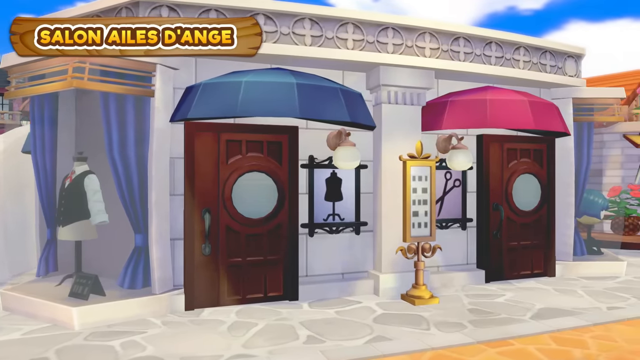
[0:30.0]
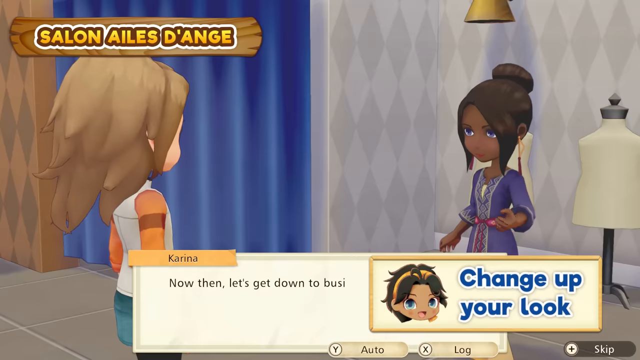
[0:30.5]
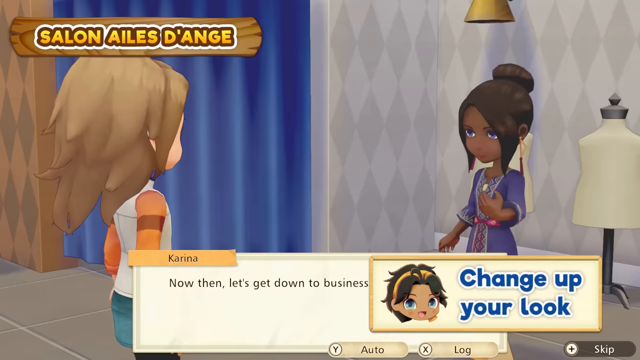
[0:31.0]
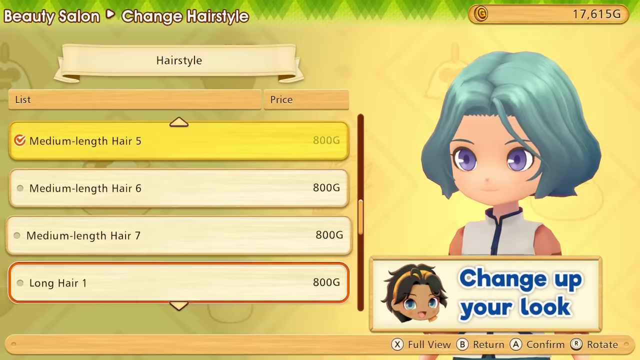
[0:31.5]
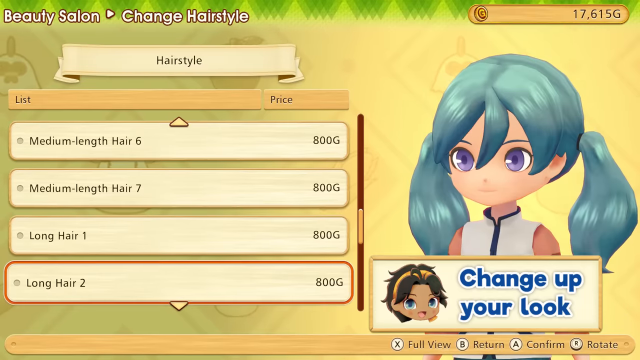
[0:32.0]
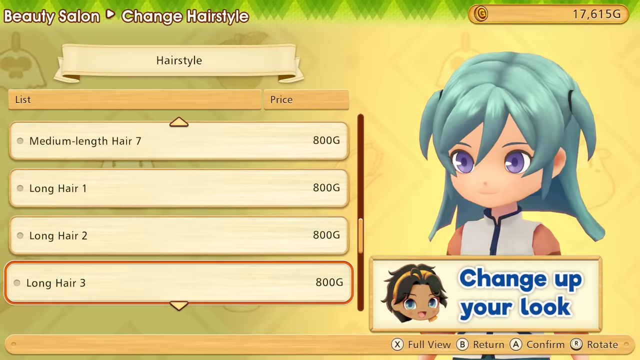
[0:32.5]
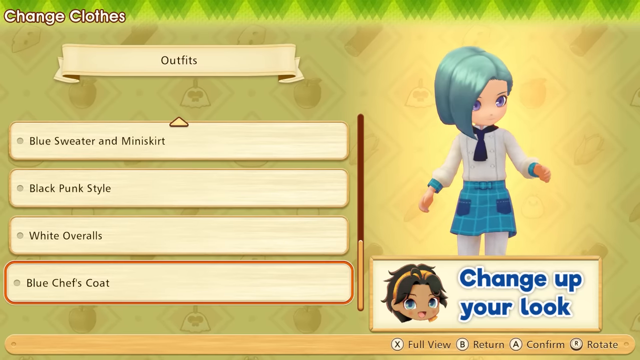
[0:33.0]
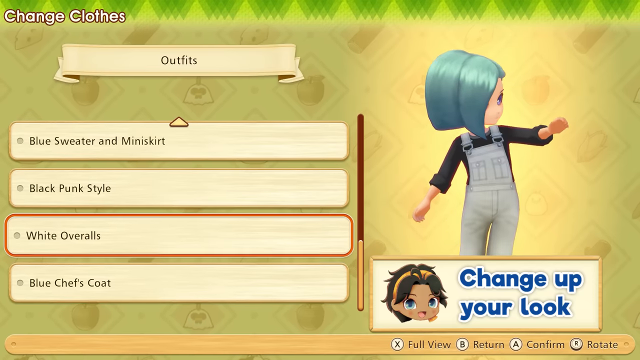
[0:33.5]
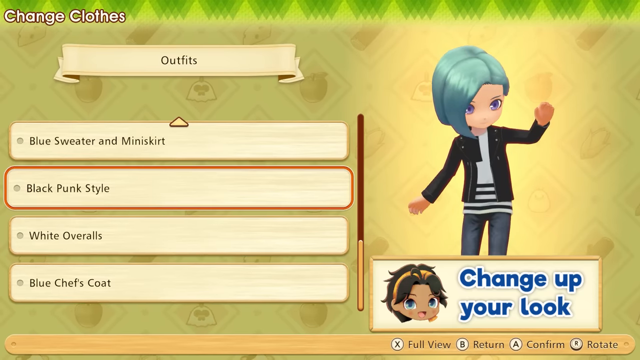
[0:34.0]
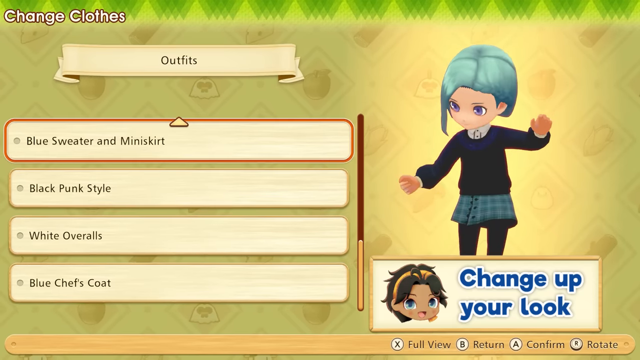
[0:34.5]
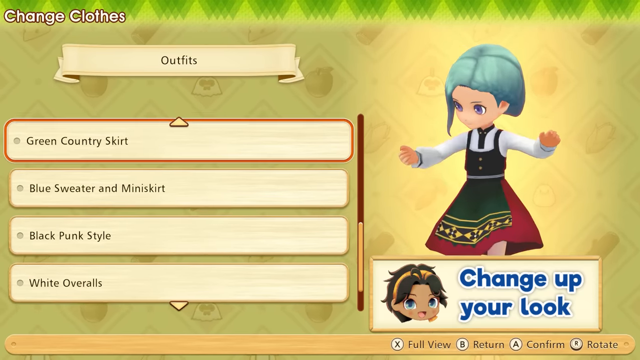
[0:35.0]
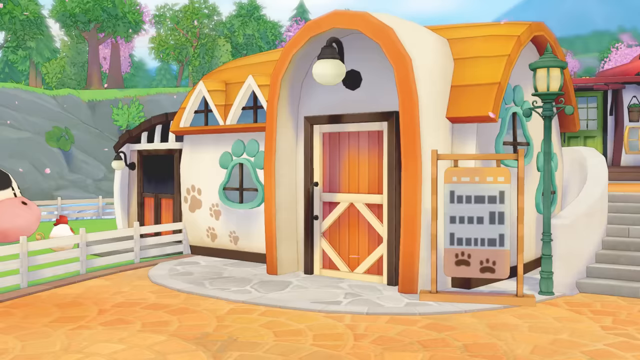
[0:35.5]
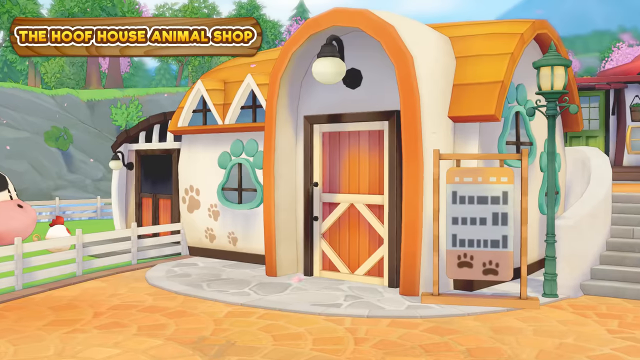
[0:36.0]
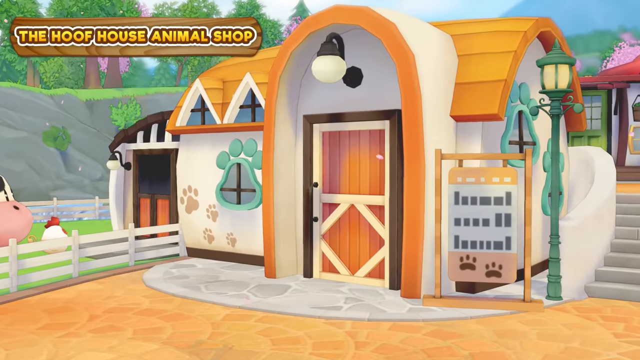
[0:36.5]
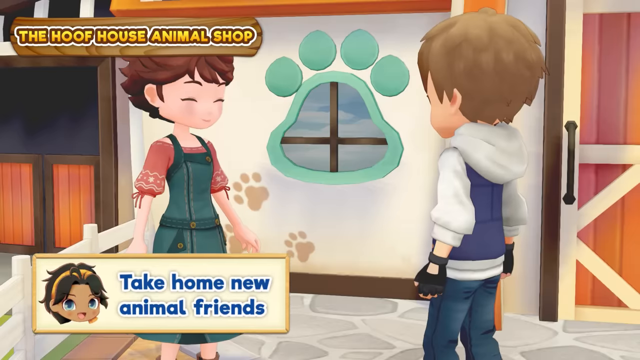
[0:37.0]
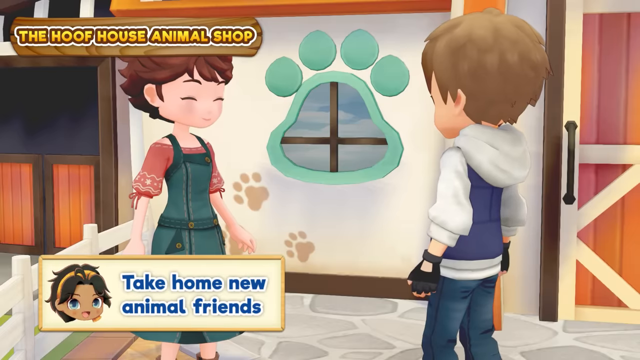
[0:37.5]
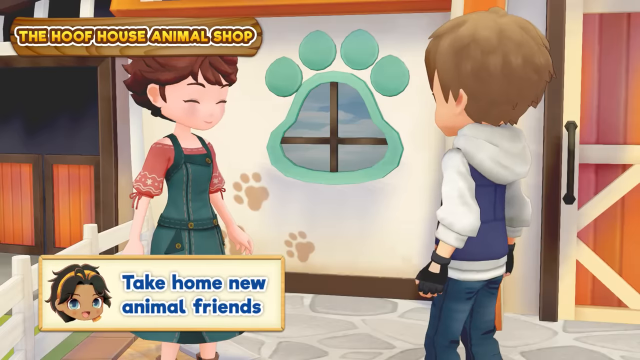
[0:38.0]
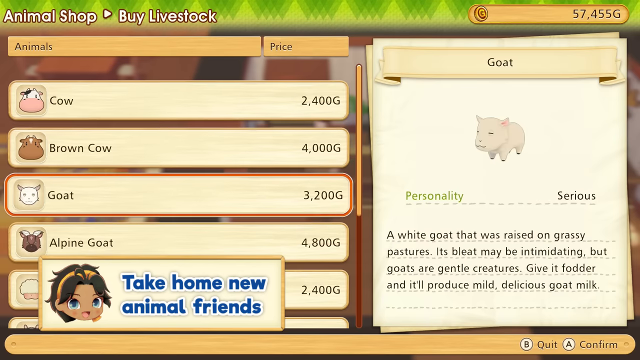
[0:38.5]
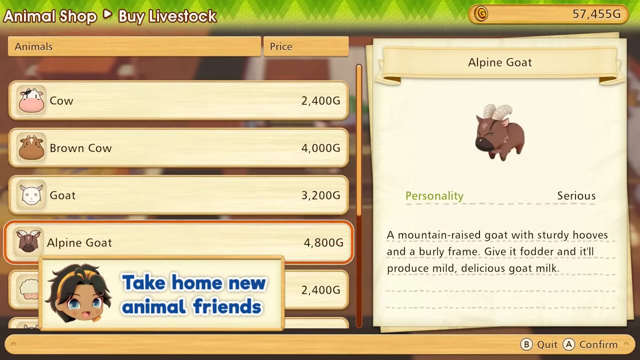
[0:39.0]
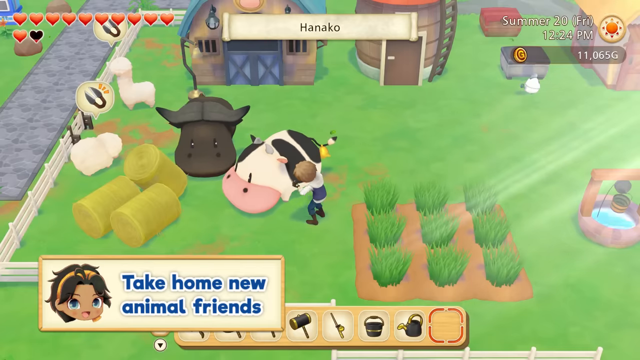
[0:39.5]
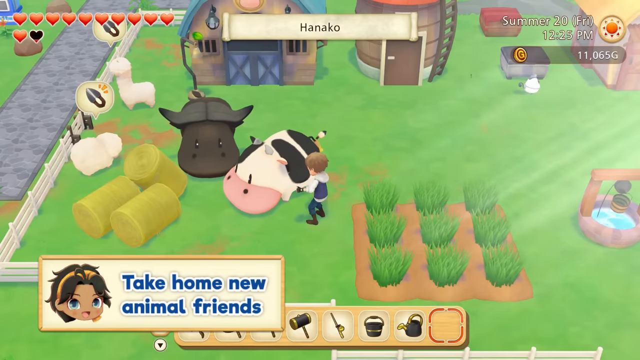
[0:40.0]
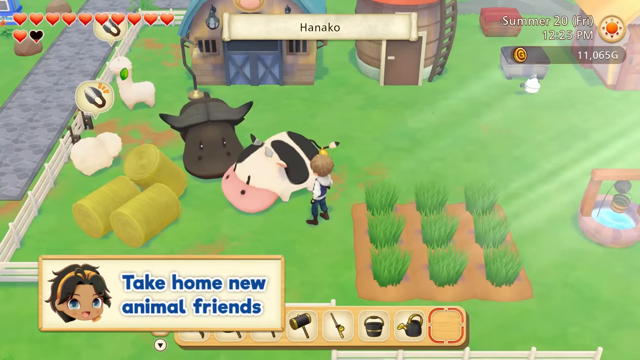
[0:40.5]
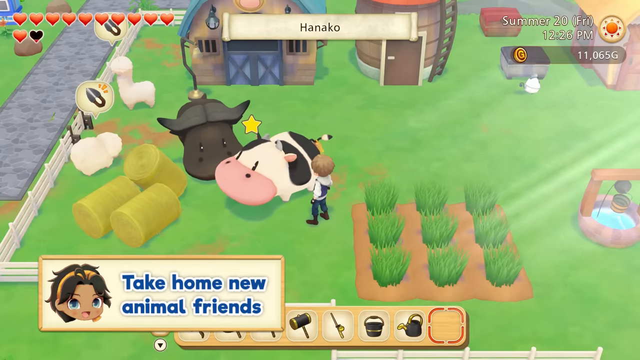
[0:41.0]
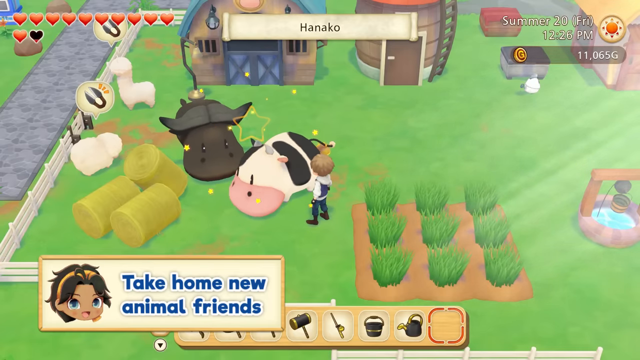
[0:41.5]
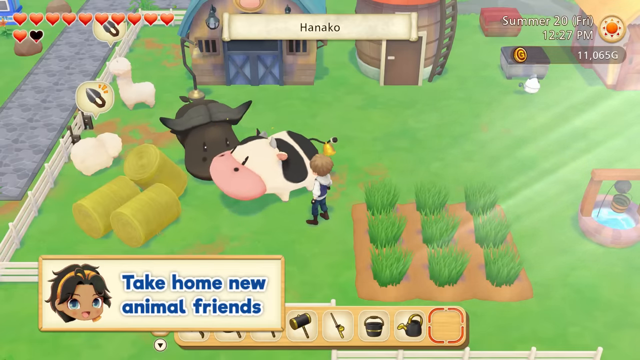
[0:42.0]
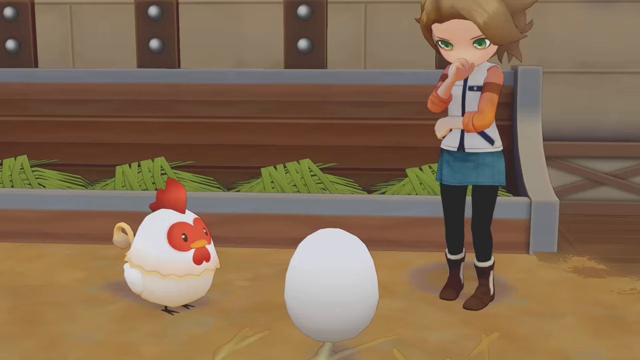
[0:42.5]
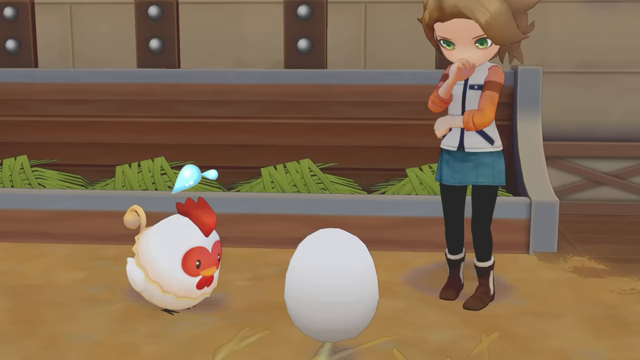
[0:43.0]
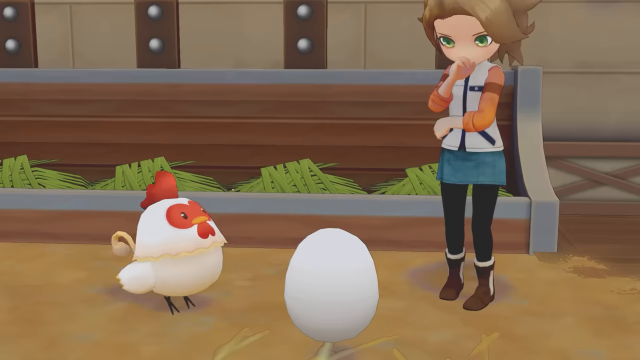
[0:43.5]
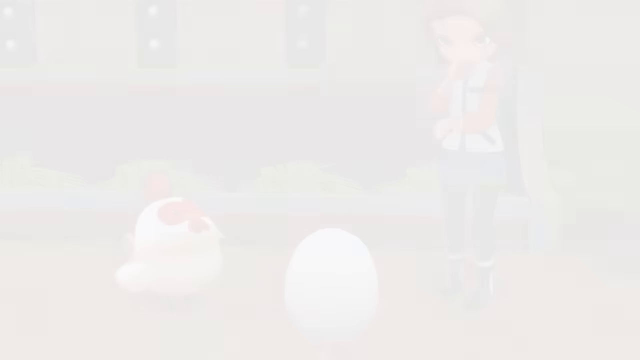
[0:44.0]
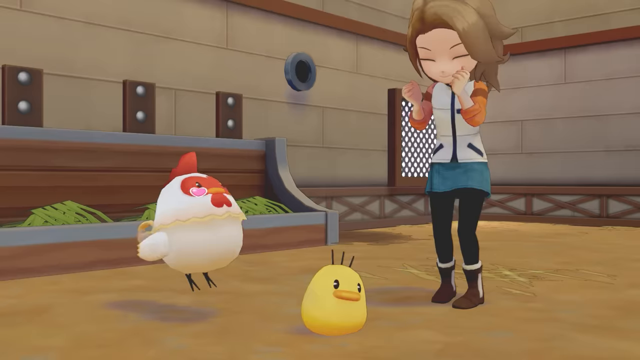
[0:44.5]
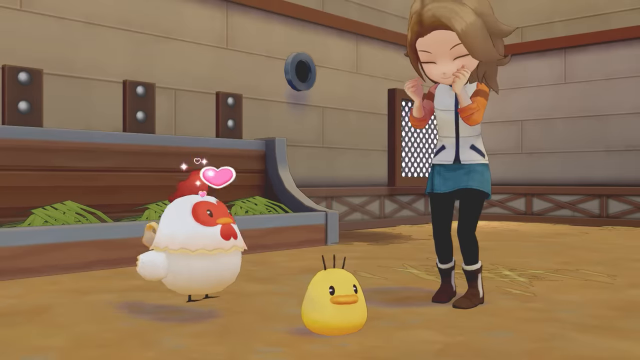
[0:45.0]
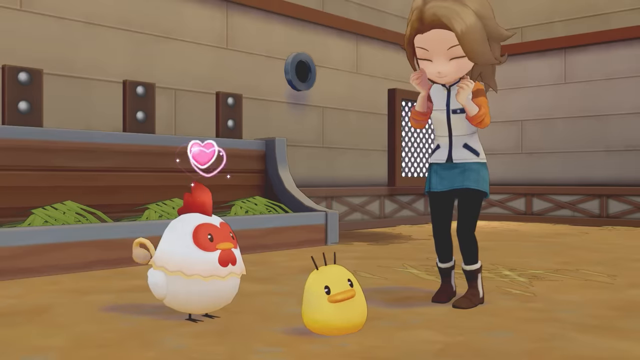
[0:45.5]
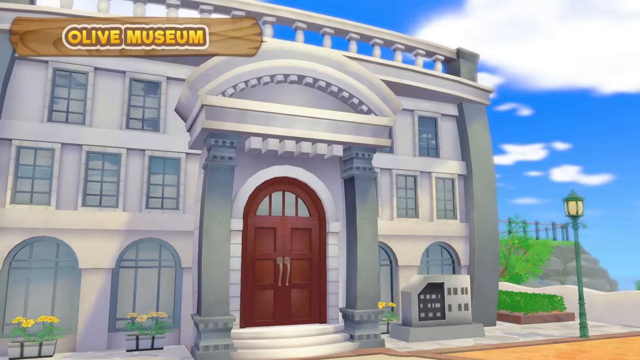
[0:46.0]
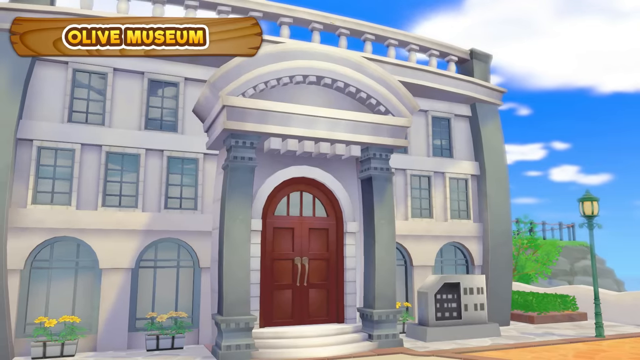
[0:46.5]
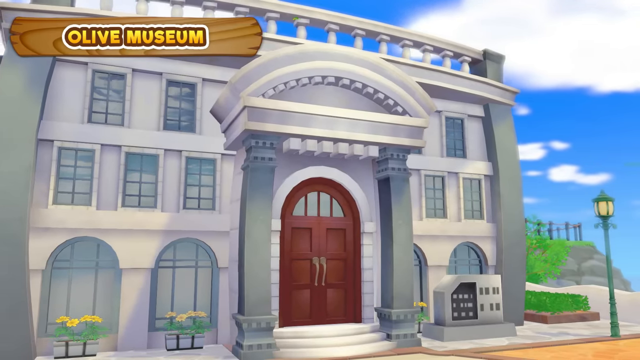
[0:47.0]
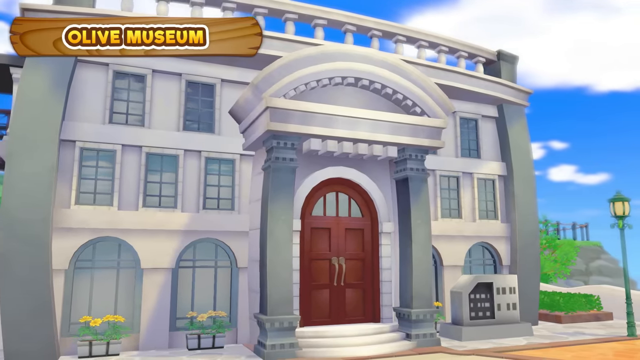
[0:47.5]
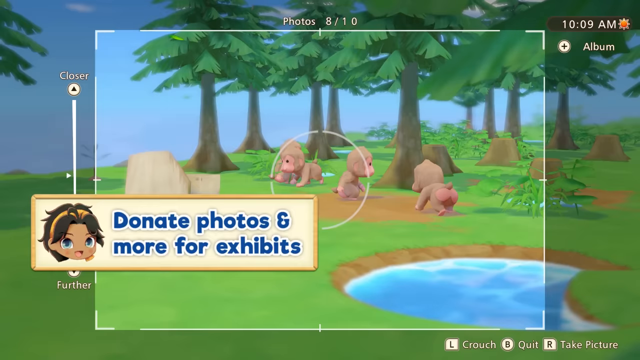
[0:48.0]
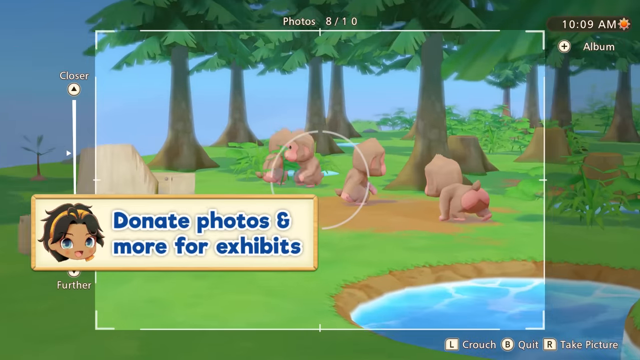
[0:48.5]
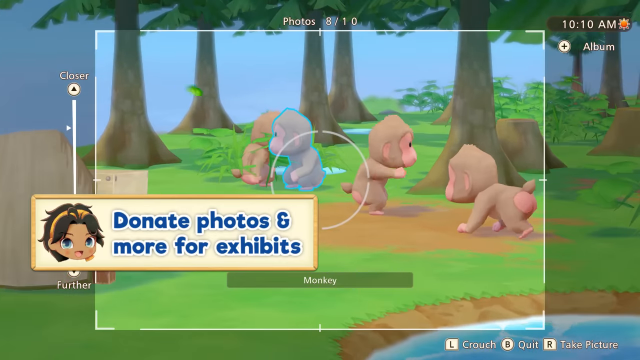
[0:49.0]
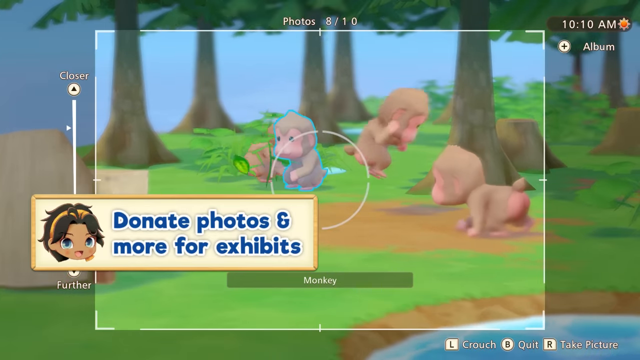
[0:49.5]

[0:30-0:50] Several characters are shown, including a Black girl who runs the salon. The screens flip by quickly. One is a farm and animal screen with very large cows: one has horns and the other looks like a dairy cow. There appears to be a llama in the background, and there is a sheep that needs to be sheared. The farm has crops, land, a silo-looking structure and a house. The cow's name is Hanako, and the date and time shown are Summer 20, 6:26 p.m. The next scene seems to be an egg hatching, followed by the museum with monkeys.